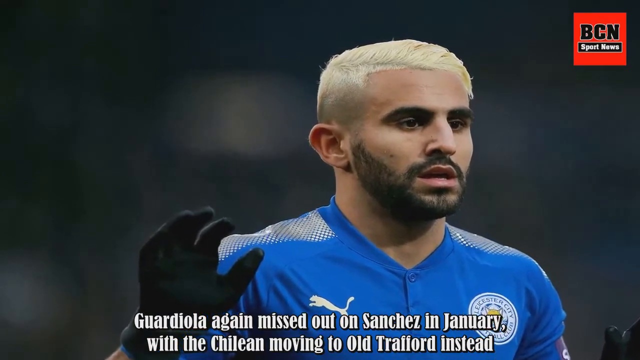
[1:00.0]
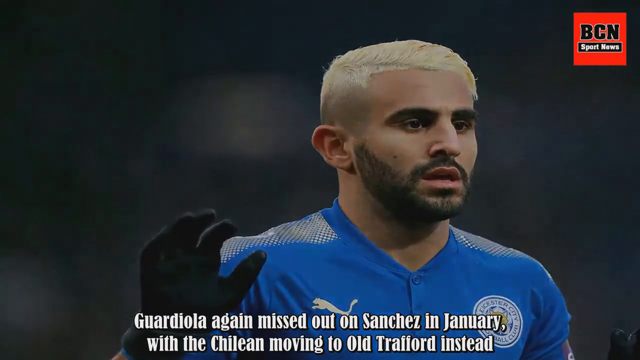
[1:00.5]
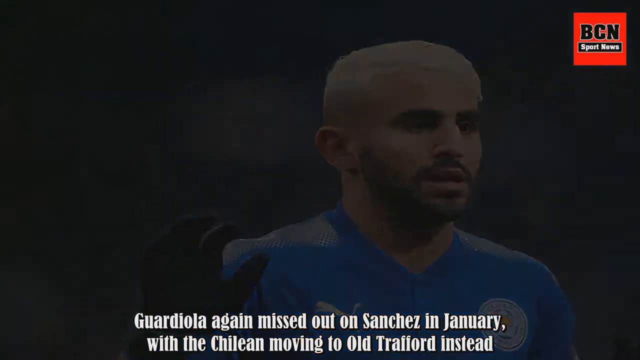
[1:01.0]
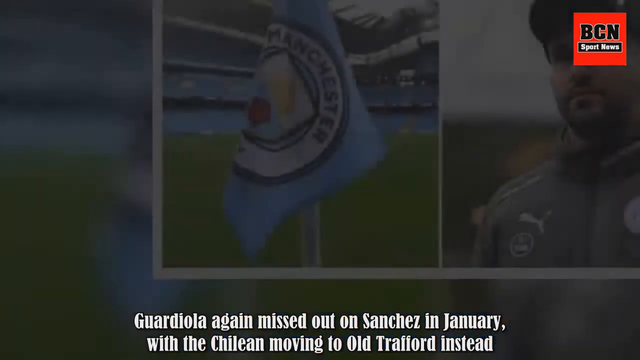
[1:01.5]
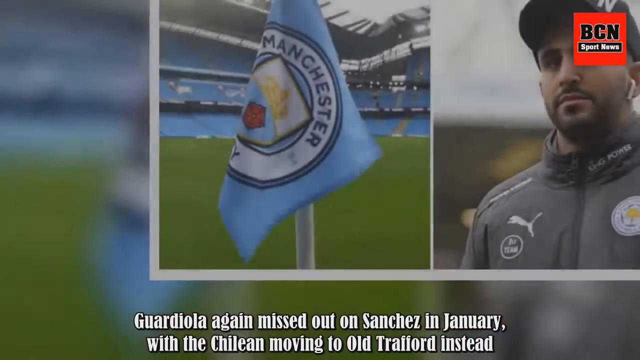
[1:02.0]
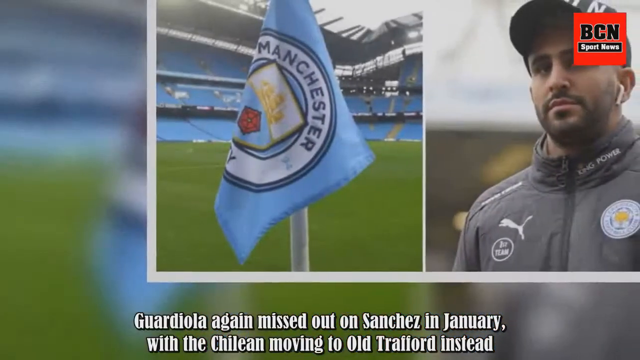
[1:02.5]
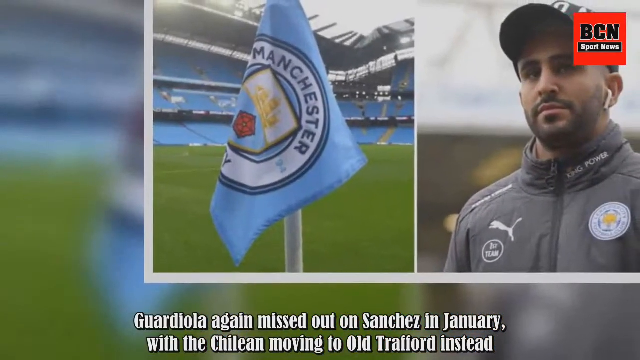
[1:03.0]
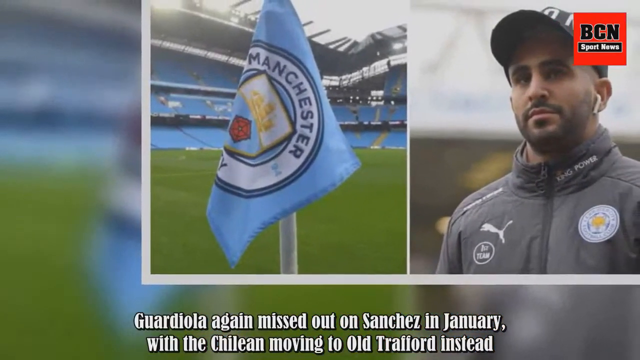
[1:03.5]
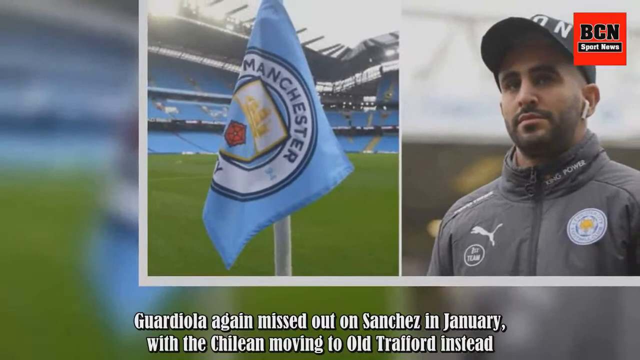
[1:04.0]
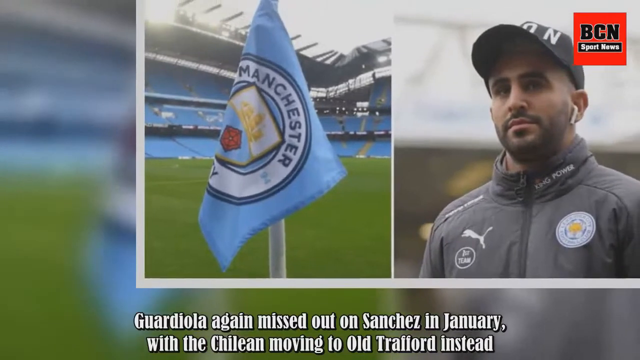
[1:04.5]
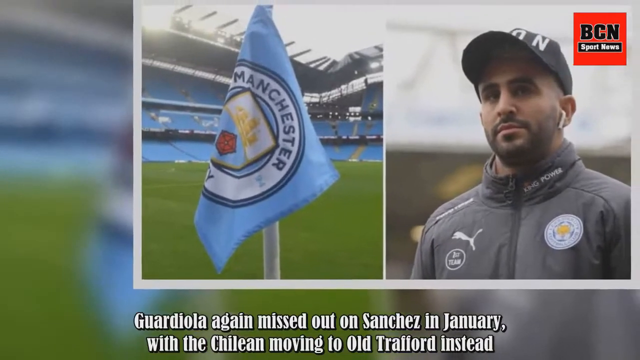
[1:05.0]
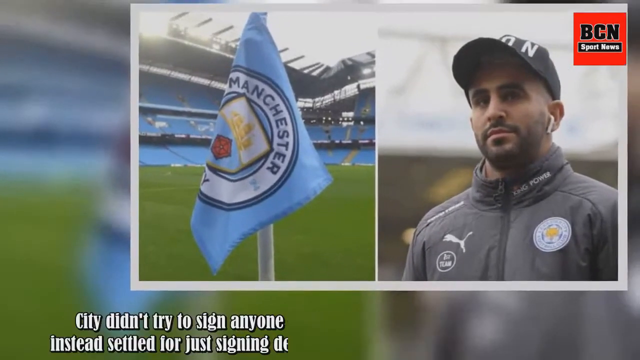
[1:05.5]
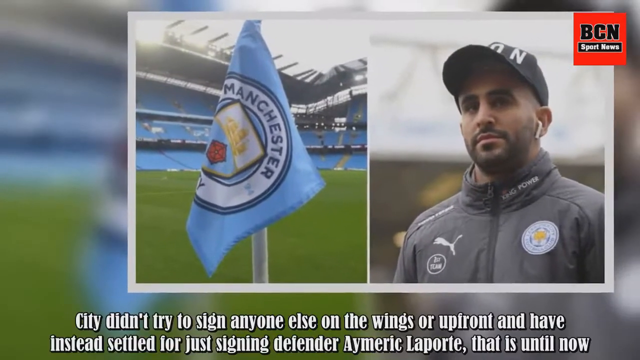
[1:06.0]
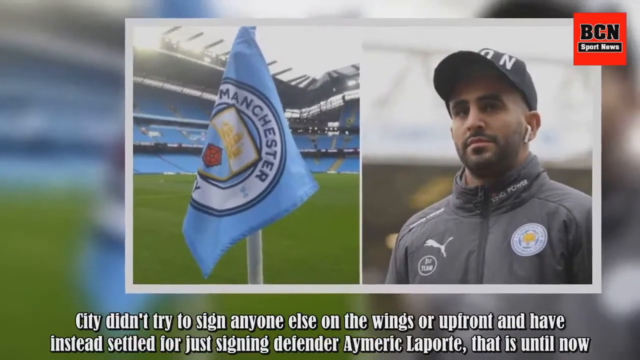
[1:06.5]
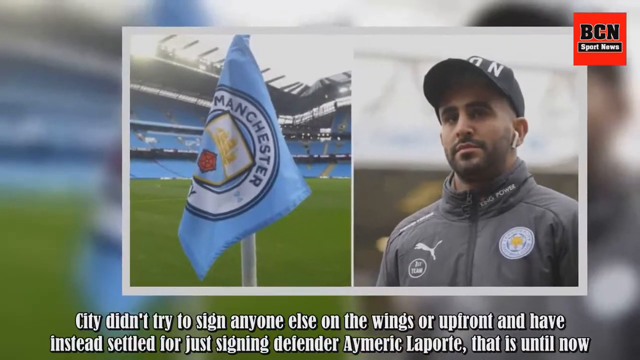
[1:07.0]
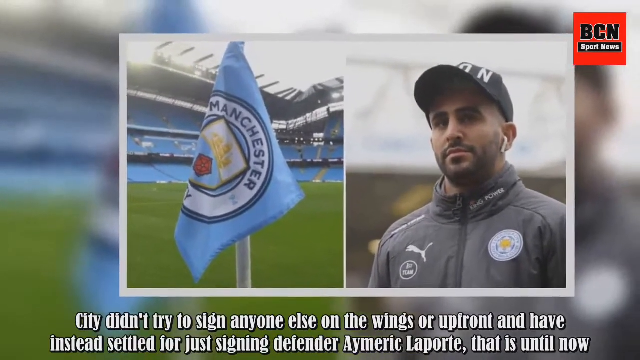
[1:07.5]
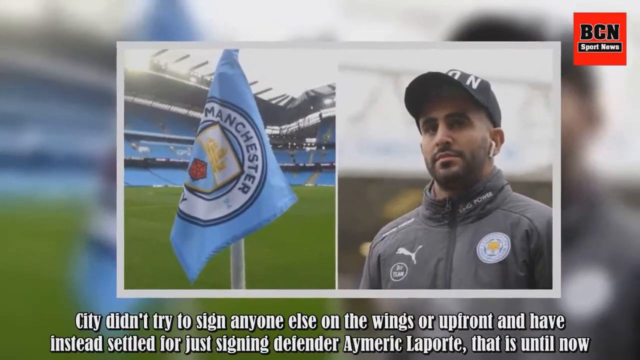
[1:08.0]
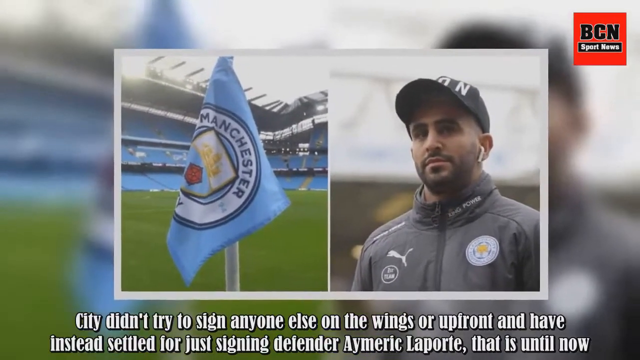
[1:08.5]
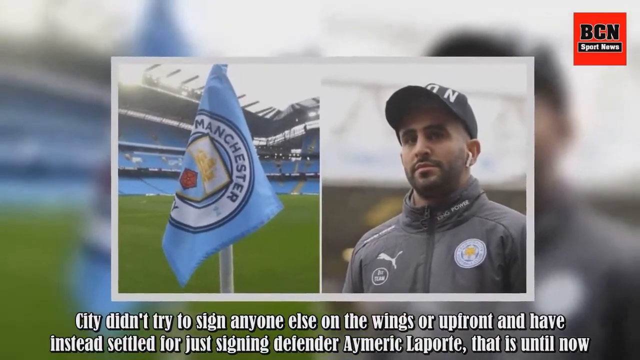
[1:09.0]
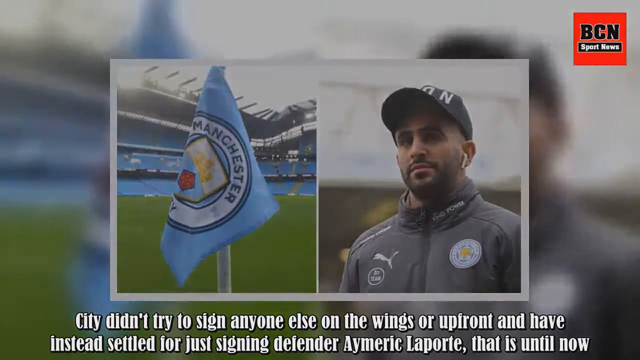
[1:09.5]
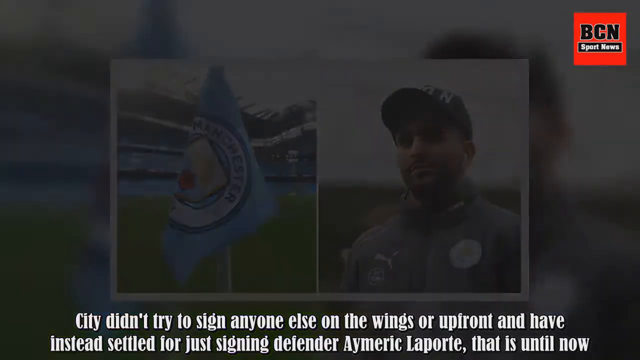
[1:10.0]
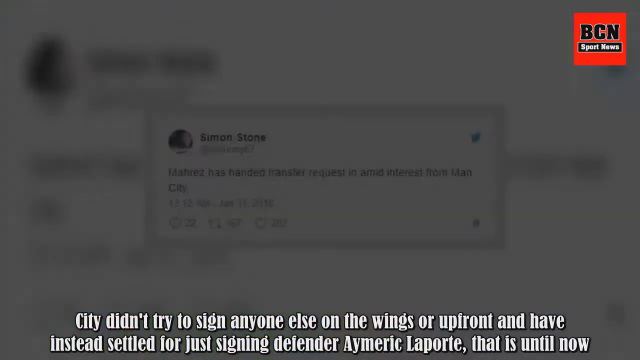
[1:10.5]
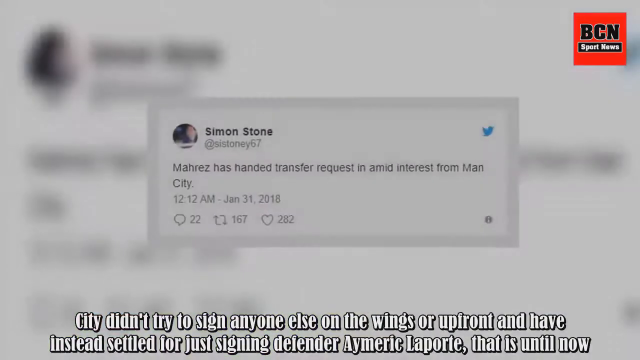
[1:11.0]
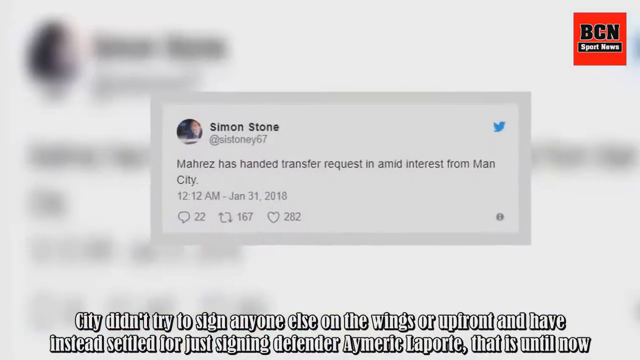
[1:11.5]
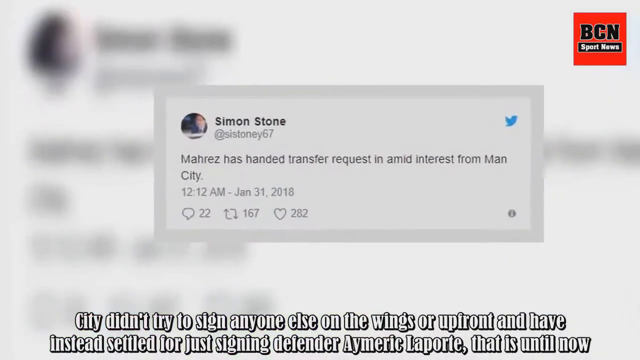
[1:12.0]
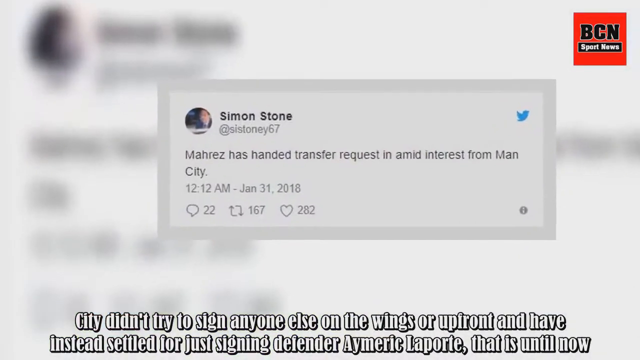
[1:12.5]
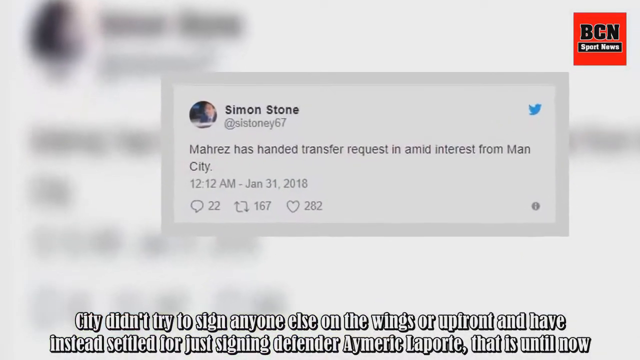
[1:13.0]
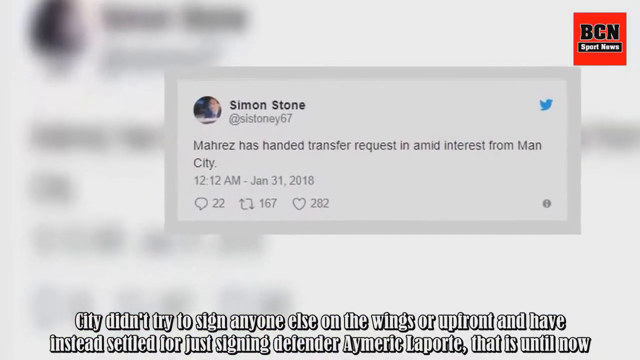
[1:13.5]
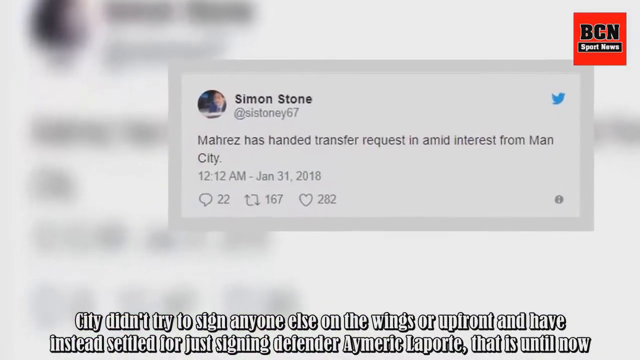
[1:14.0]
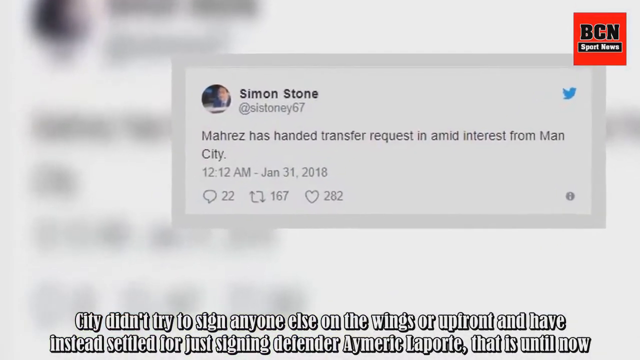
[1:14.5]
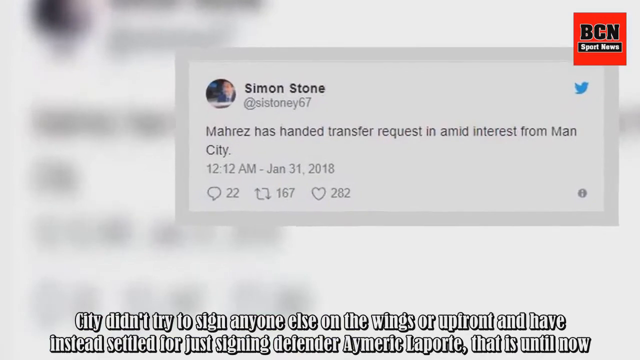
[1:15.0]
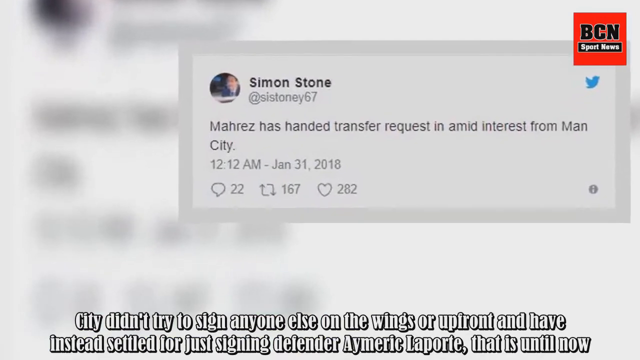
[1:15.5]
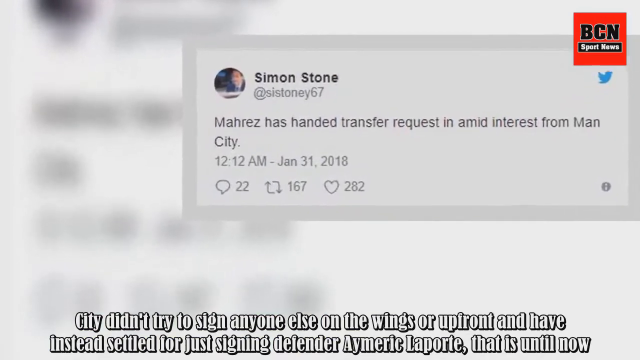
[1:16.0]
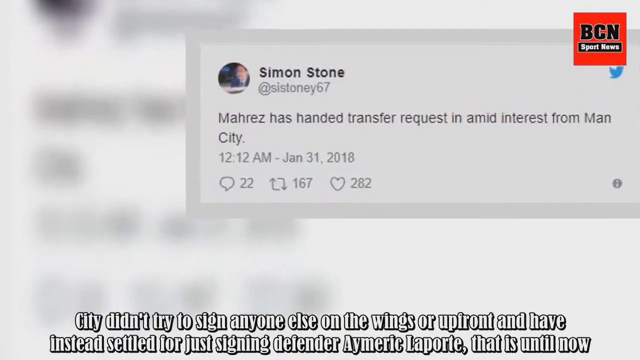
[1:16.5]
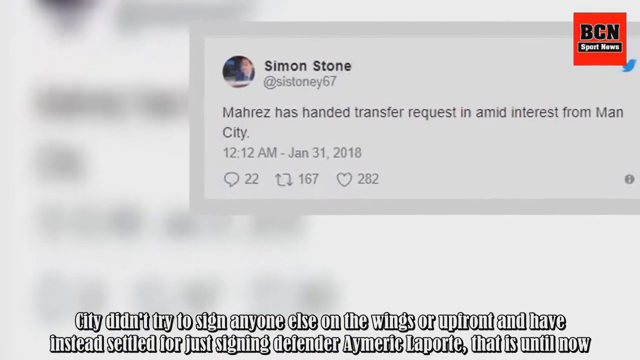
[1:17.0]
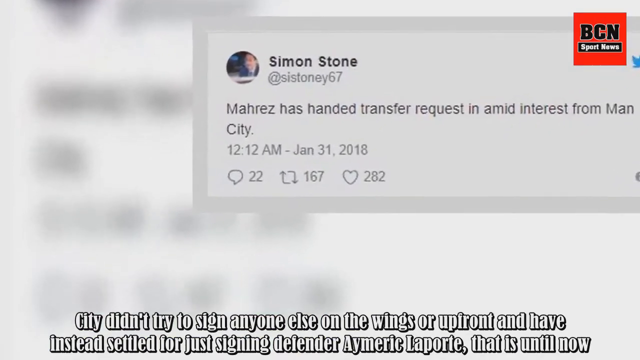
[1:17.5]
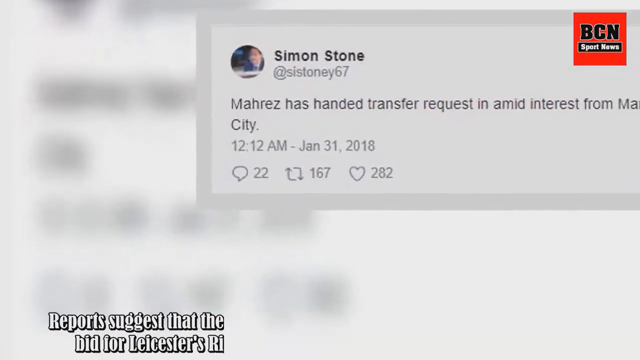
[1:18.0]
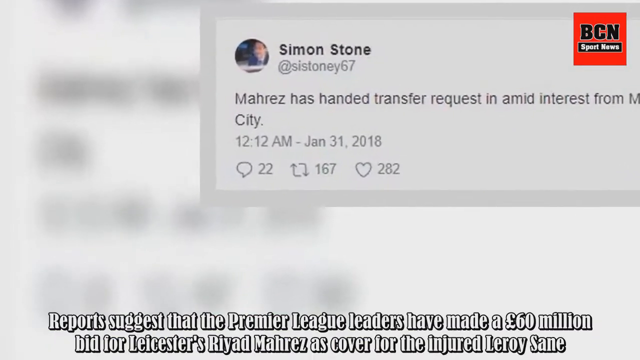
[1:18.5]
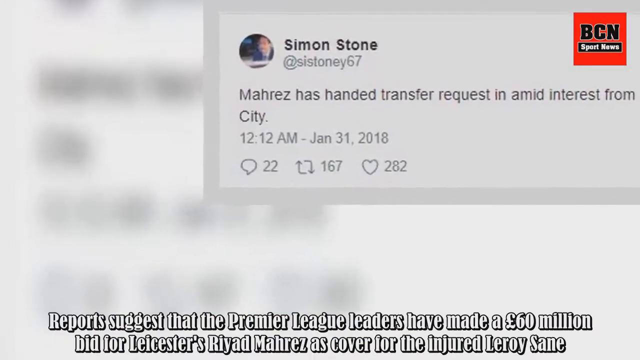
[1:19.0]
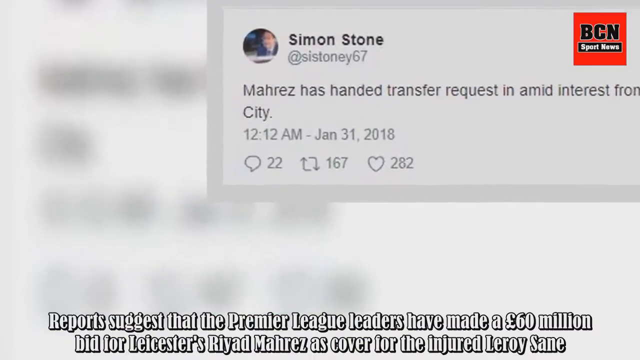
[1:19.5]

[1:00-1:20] A man with a Manchester City crest is shown on the right side of the screen, wearing a hat. A tweet from Simon Stone about a transfer request and interest from Man City is displayed. White English text at the very bottom of the screen reads "Guardiola missed out on Sanchez in January" and mentions a missed transfer opportunity.